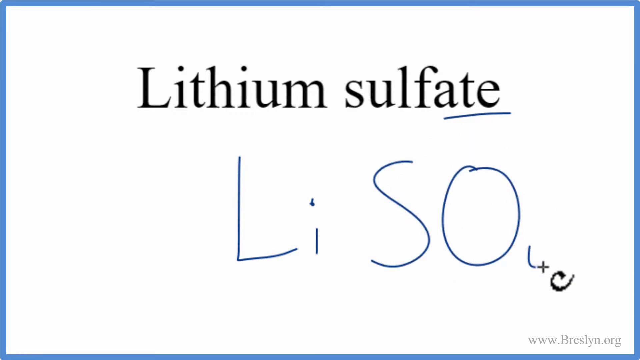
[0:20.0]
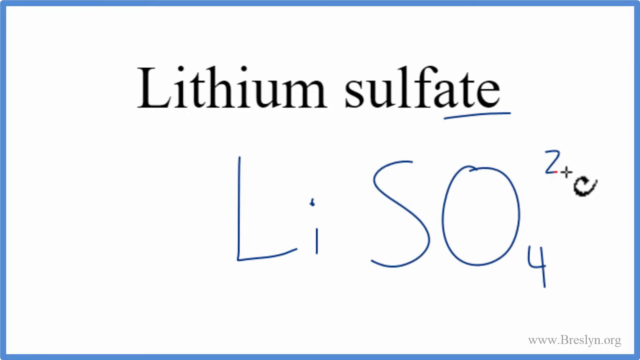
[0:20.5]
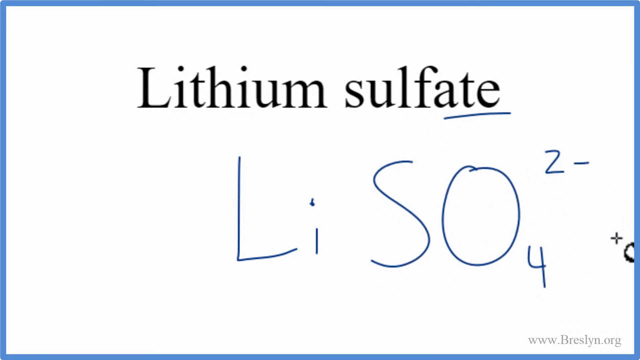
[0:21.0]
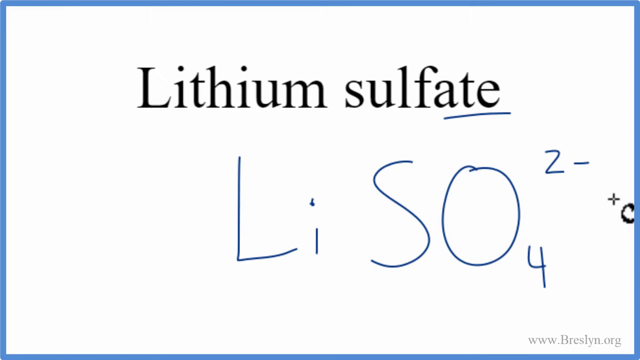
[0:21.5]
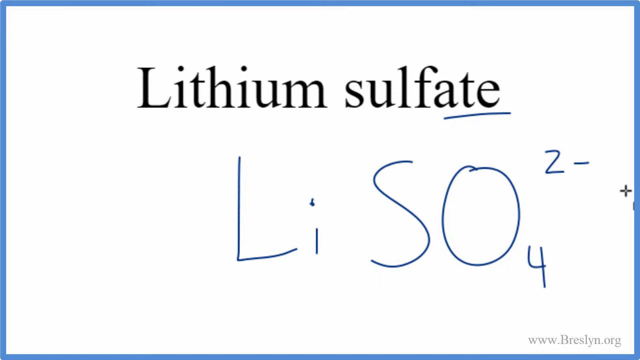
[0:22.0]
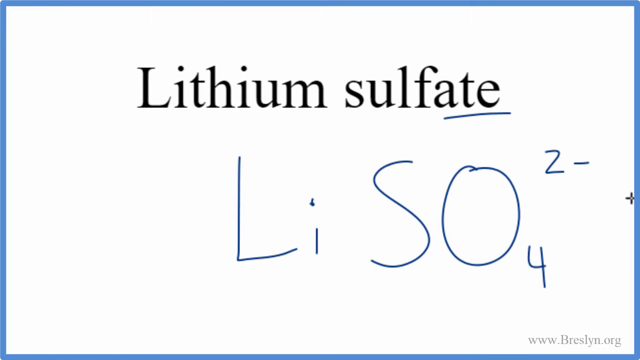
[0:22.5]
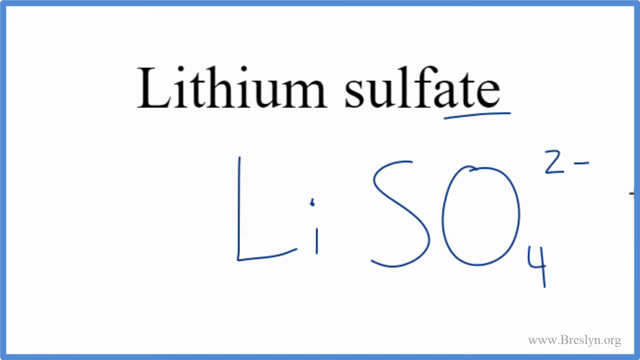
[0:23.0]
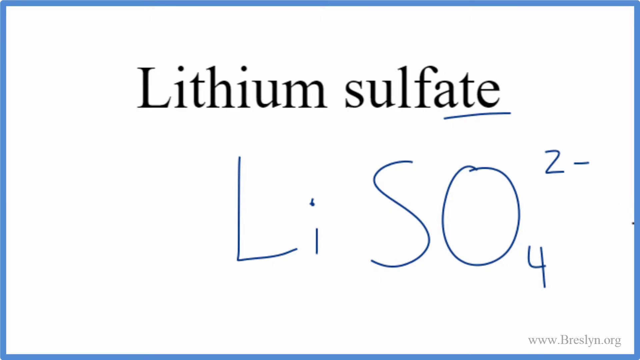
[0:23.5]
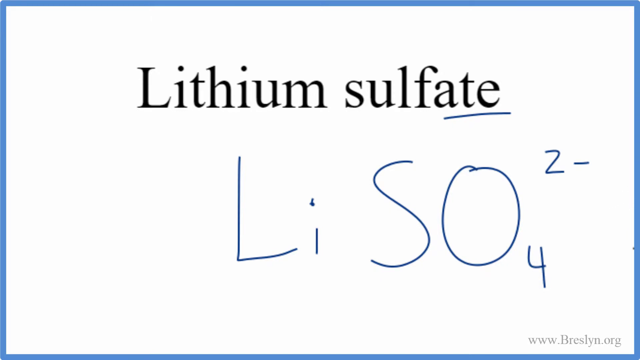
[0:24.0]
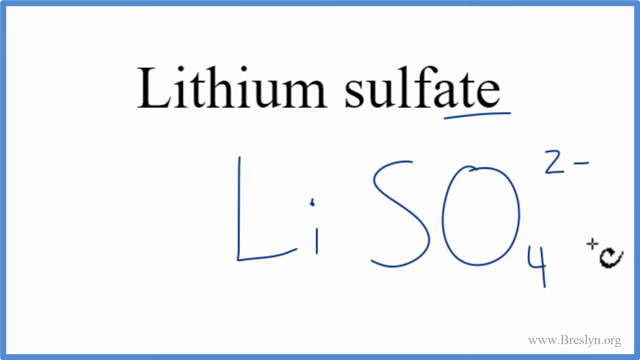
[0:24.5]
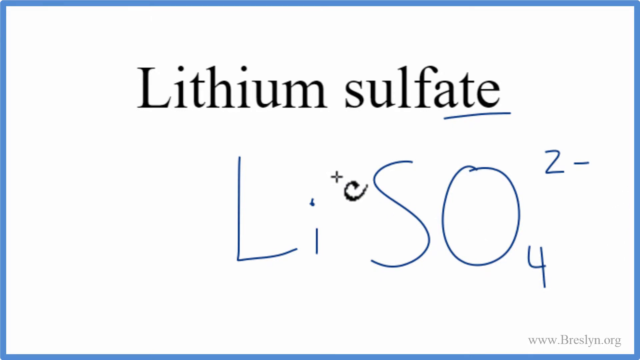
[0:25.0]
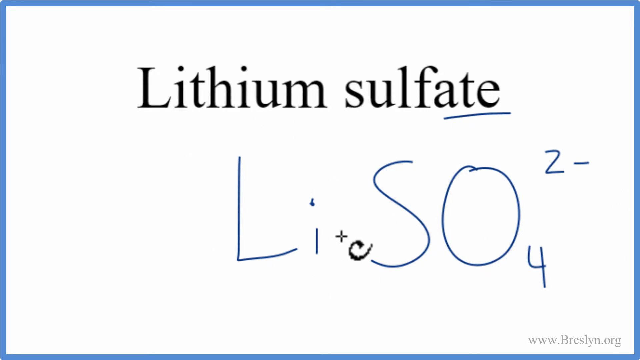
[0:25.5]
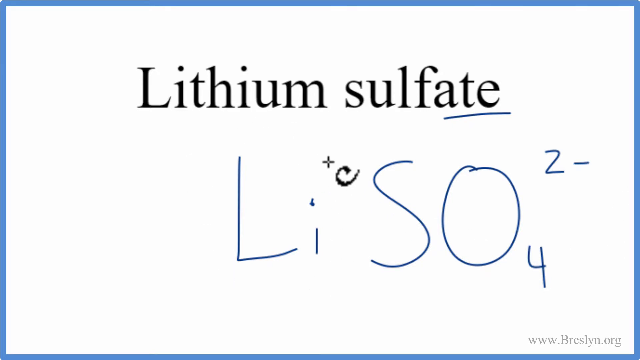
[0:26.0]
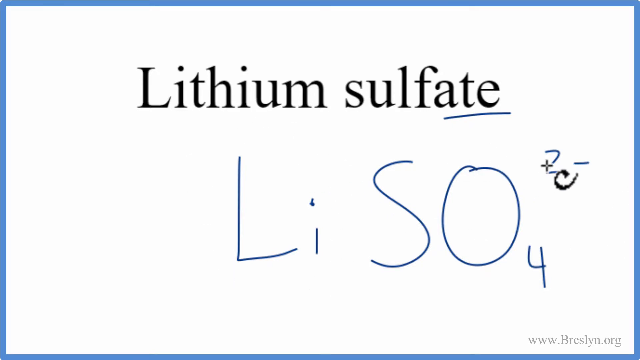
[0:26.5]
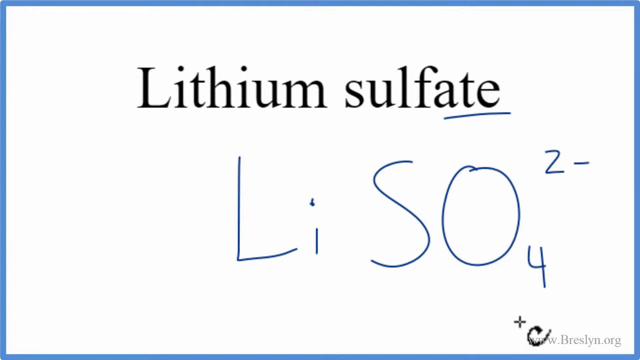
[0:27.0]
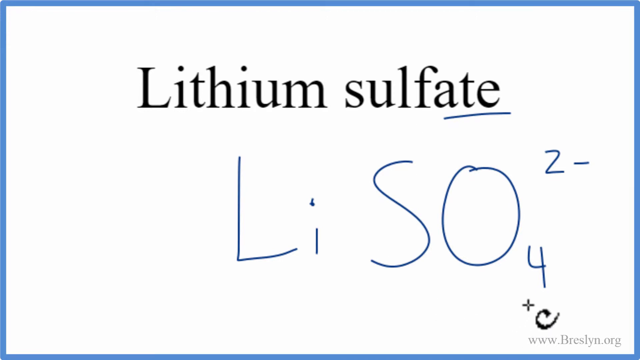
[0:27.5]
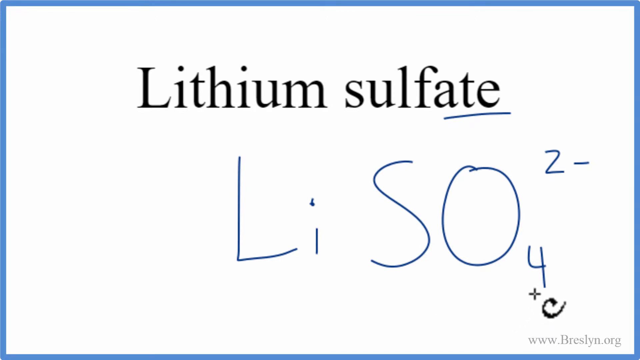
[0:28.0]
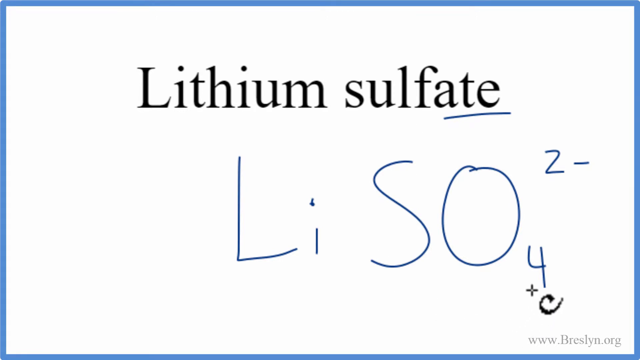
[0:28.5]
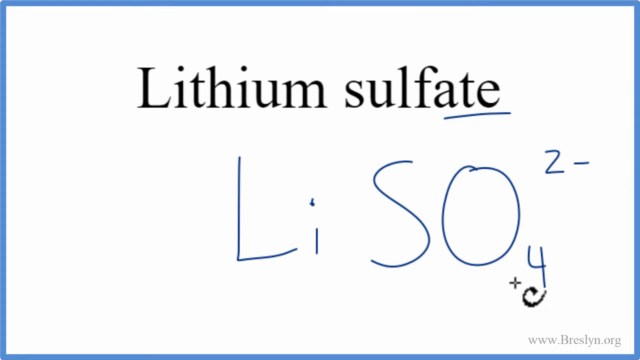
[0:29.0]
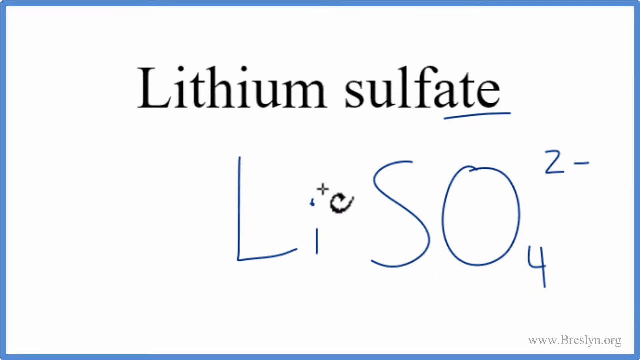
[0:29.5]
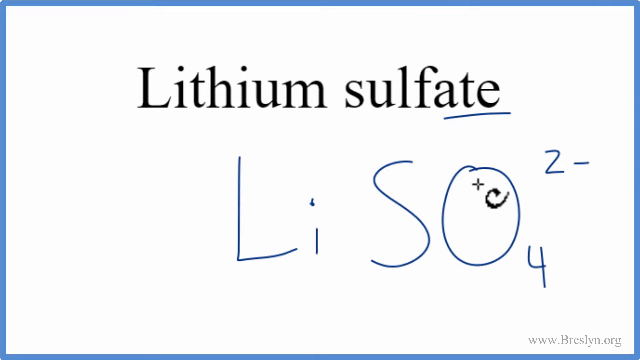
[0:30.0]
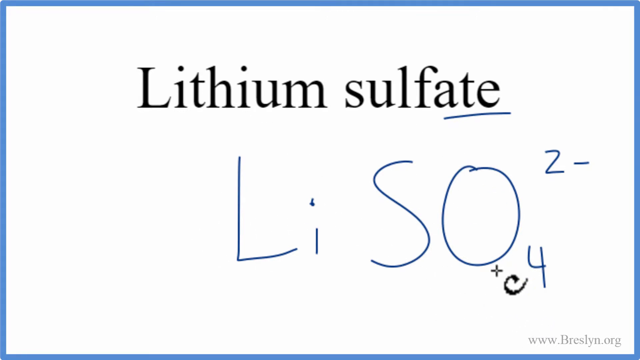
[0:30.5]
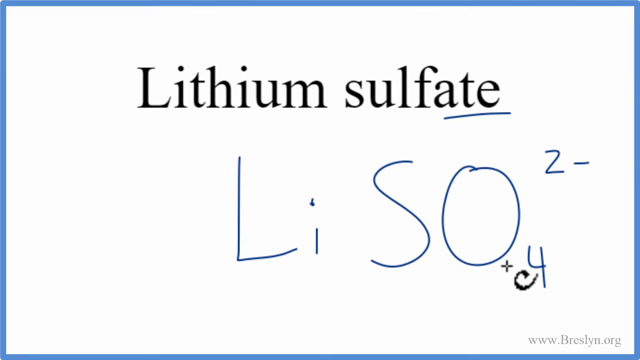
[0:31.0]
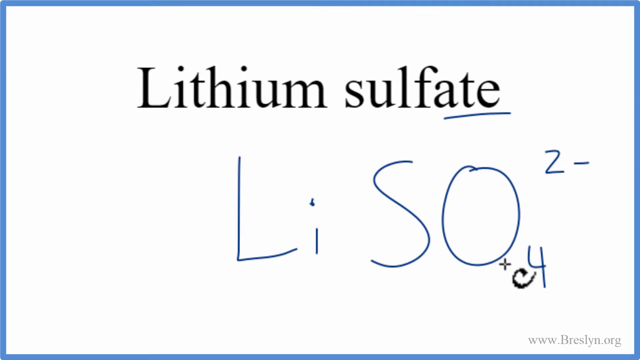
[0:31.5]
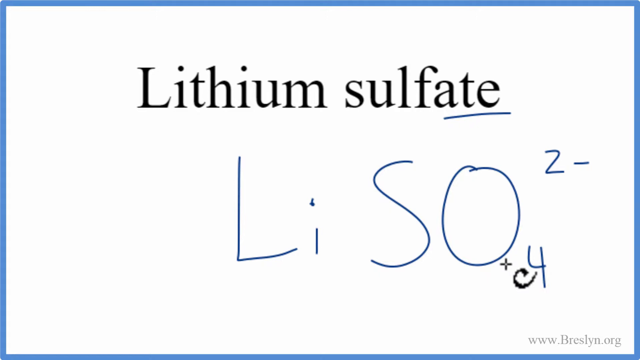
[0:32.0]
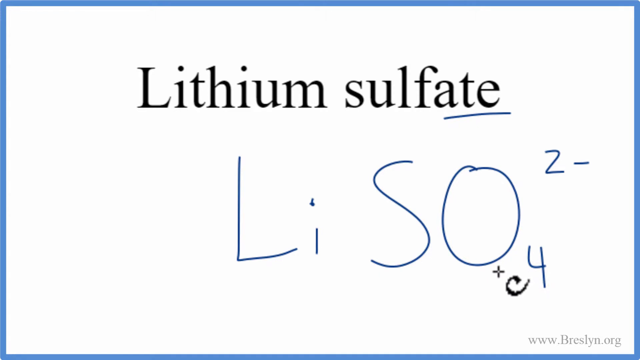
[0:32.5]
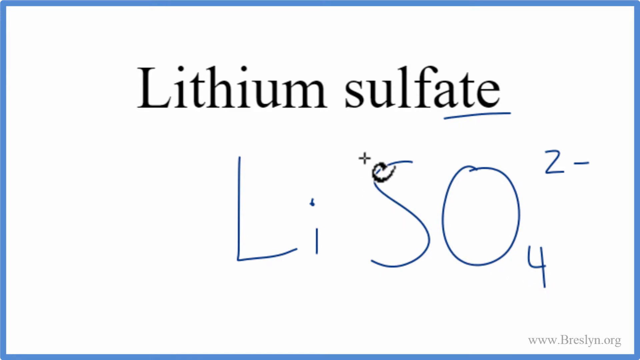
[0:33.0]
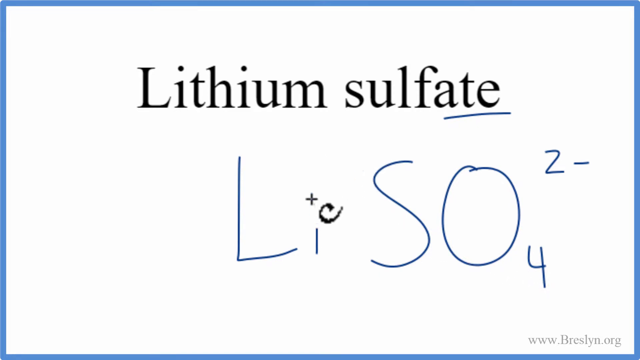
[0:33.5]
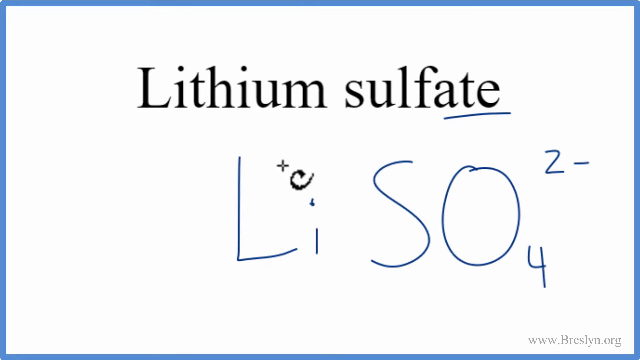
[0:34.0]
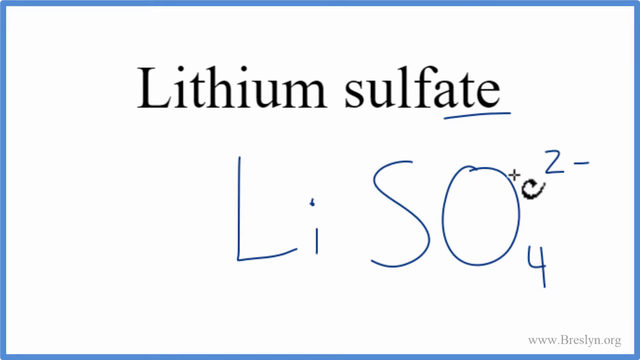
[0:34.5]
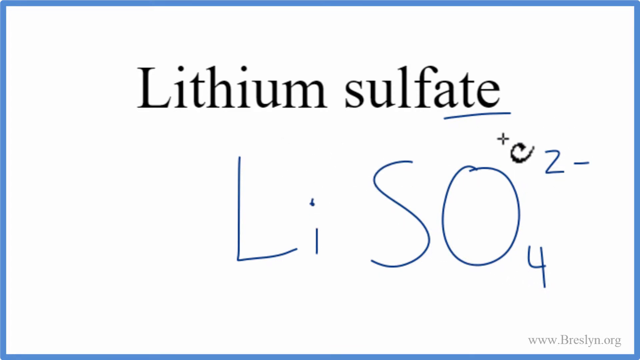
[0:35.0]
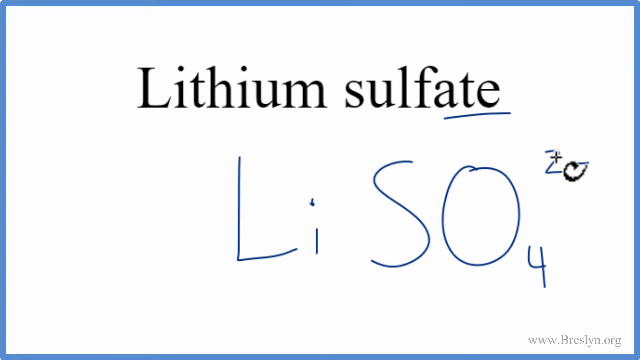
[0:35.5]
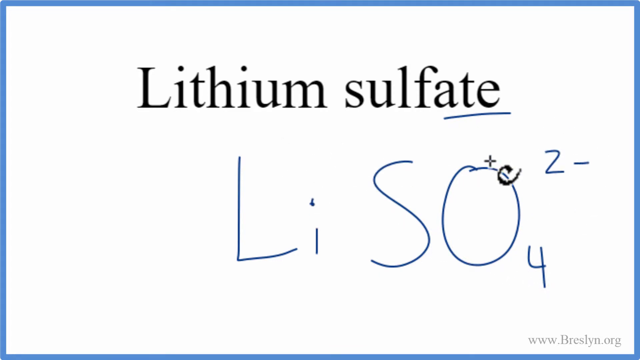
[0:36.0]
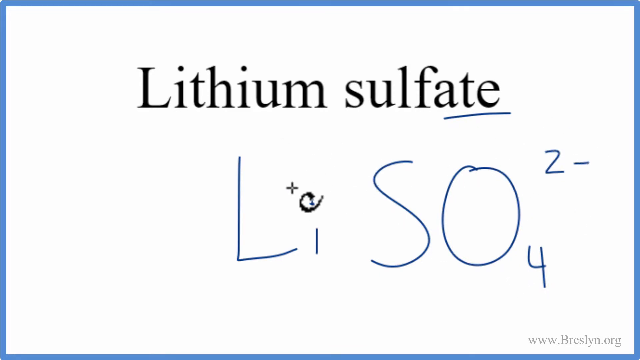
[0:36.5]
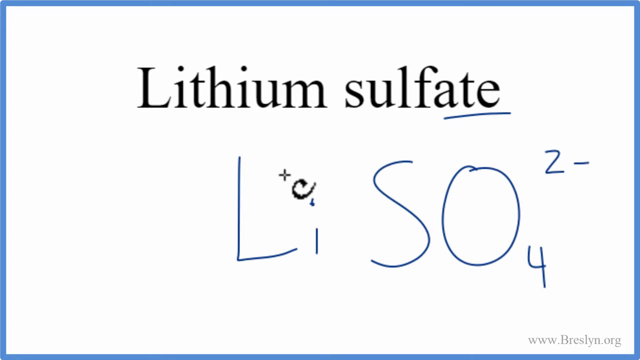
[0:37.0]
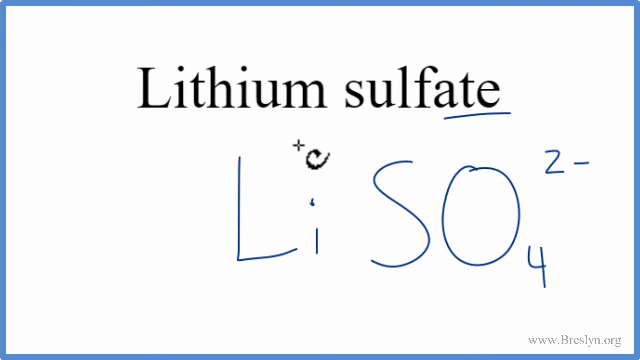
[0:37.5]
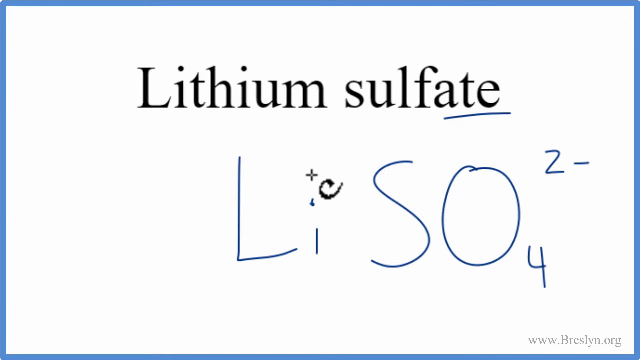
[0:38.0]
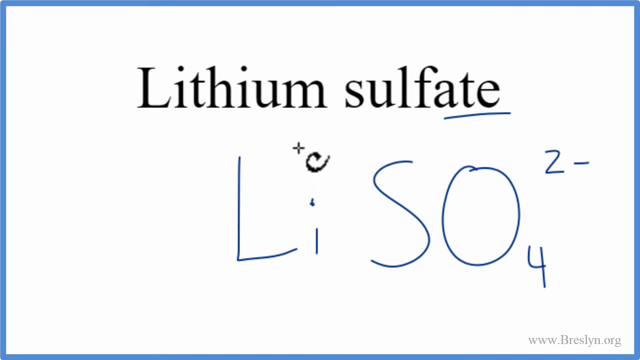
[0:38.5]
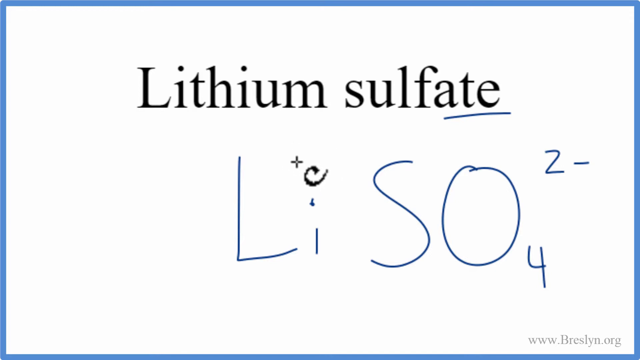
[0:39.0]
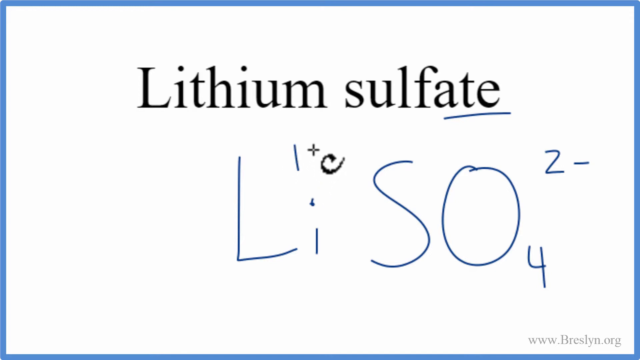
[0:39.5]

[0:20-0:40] "Lithium sulfate" remains at the top of the screen in black, and directly beneath it Li SO4 is written in blue pen. With the cursor, a 2 minus is written. The cursor circles over the Li, then over the SO, moves over to the 4, circles the 2 minus, and goes back to the Li, where a 1 plus is written above the Li.